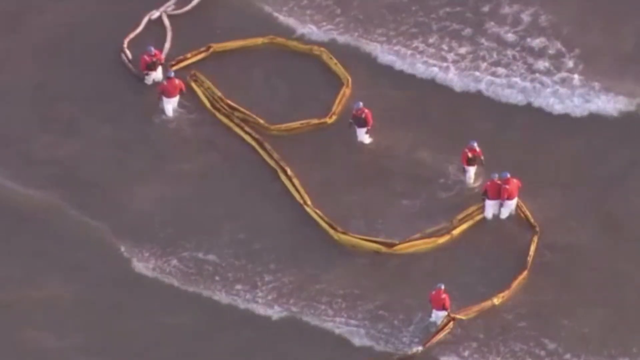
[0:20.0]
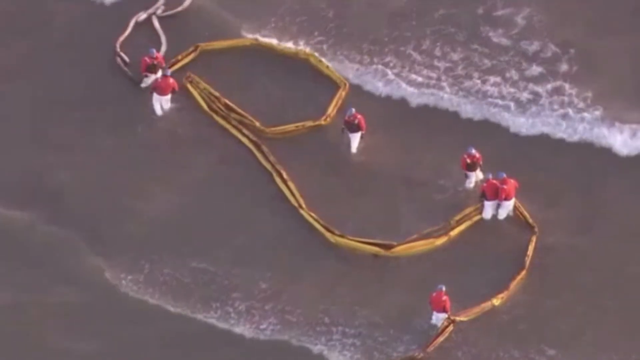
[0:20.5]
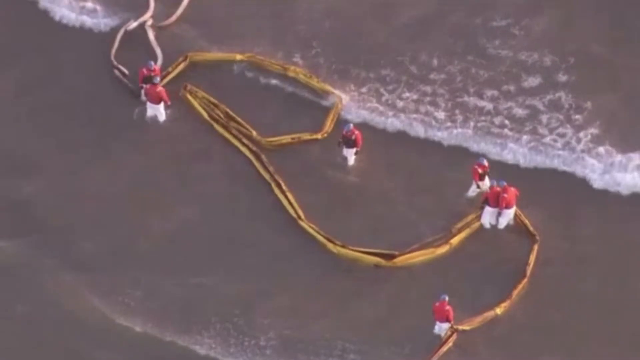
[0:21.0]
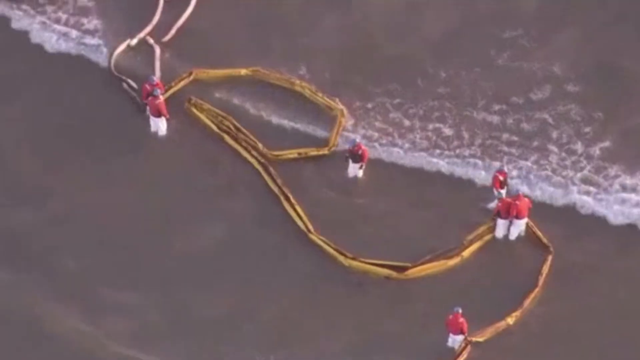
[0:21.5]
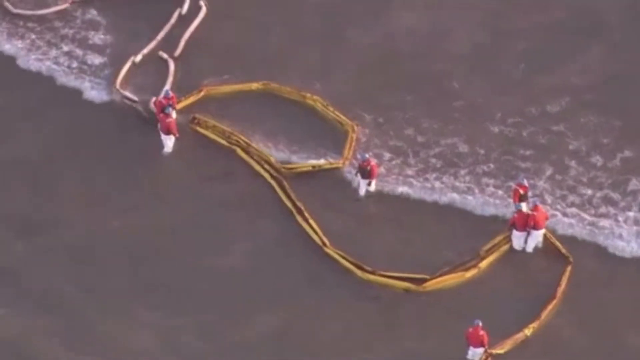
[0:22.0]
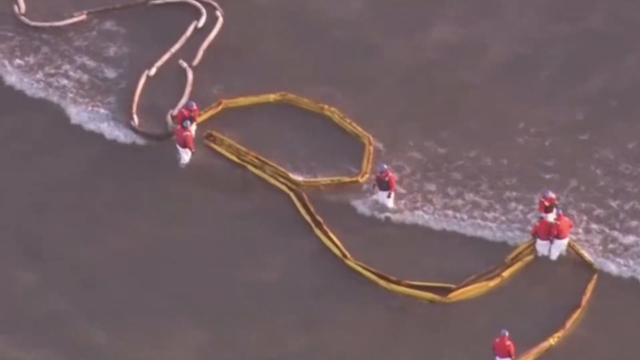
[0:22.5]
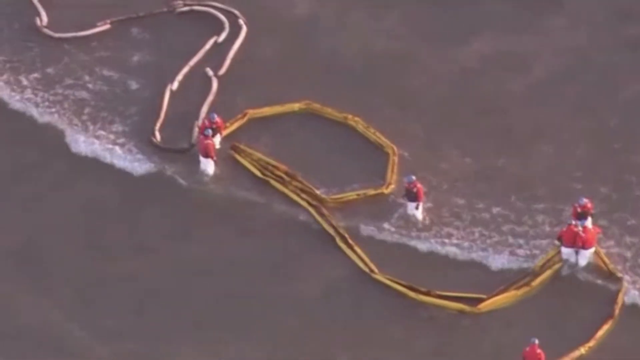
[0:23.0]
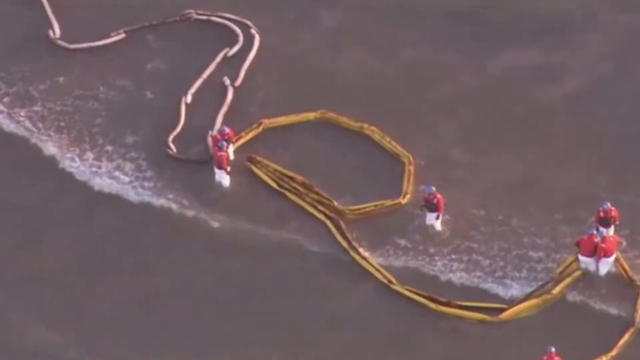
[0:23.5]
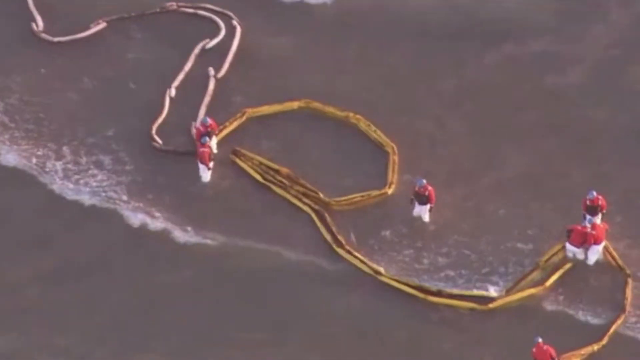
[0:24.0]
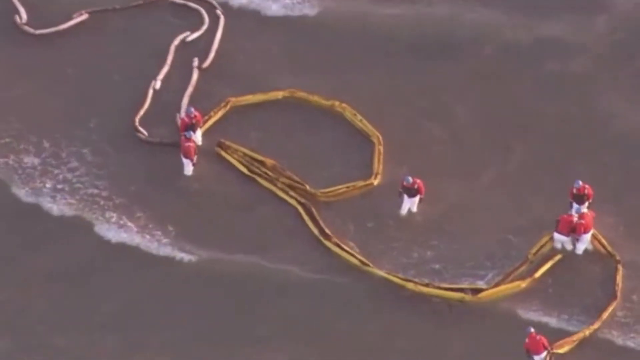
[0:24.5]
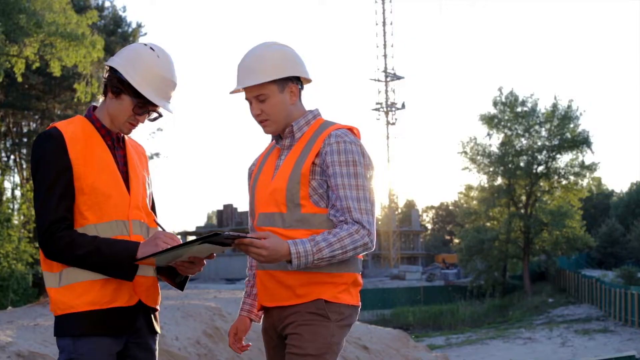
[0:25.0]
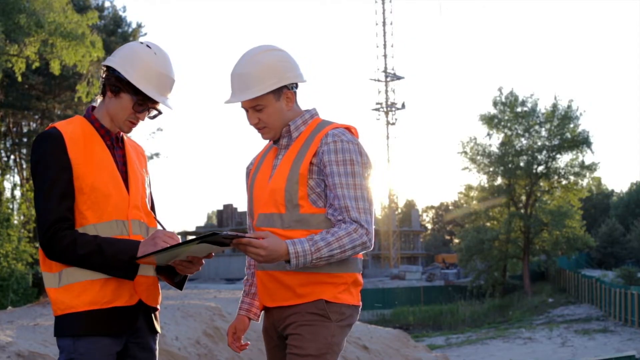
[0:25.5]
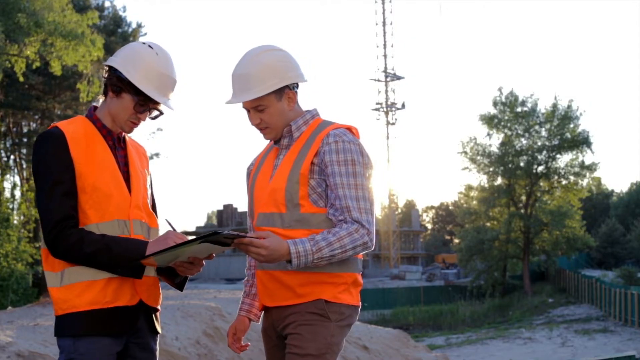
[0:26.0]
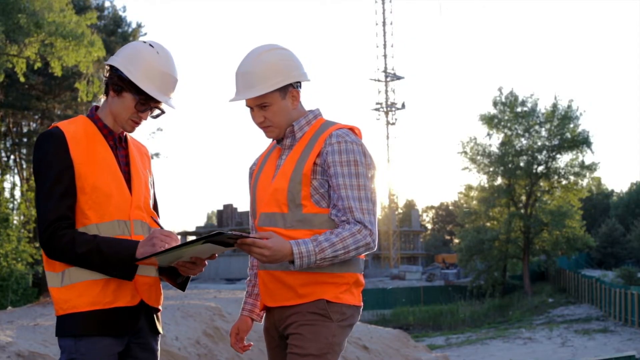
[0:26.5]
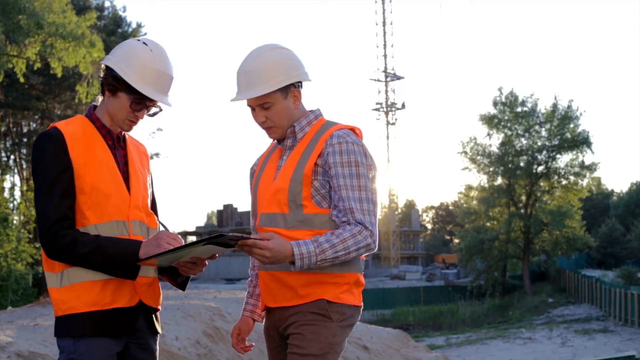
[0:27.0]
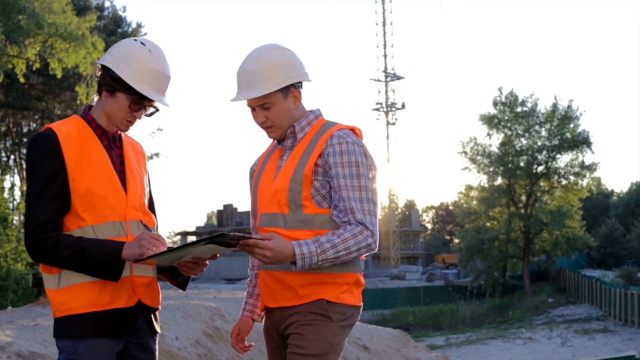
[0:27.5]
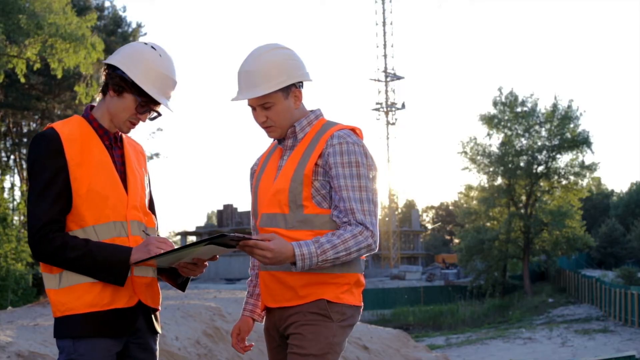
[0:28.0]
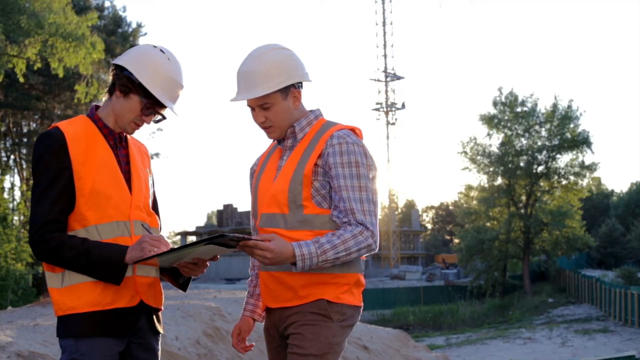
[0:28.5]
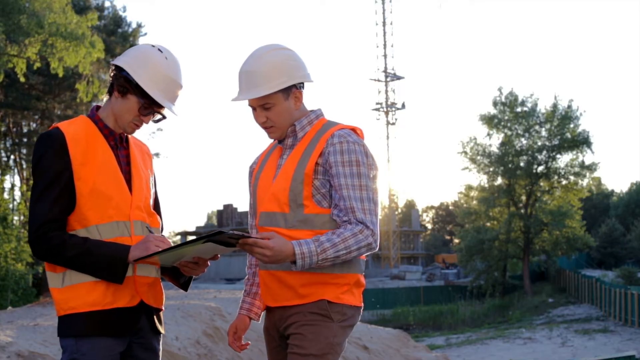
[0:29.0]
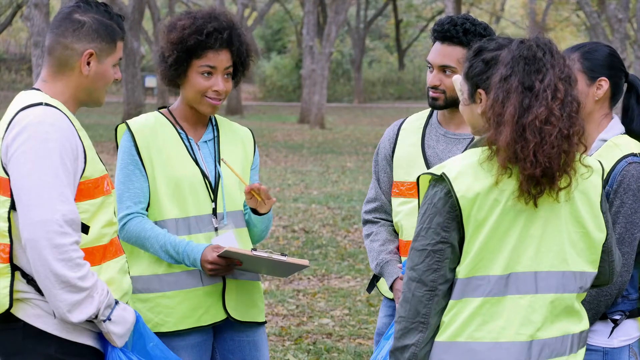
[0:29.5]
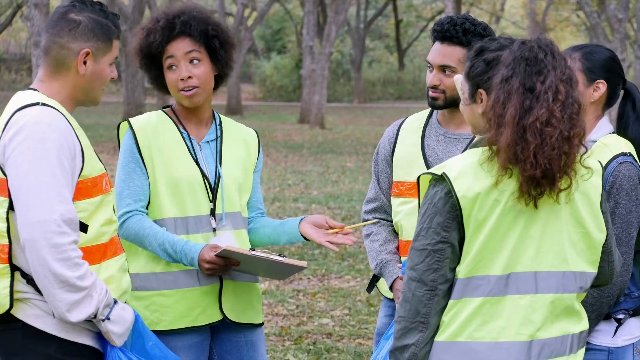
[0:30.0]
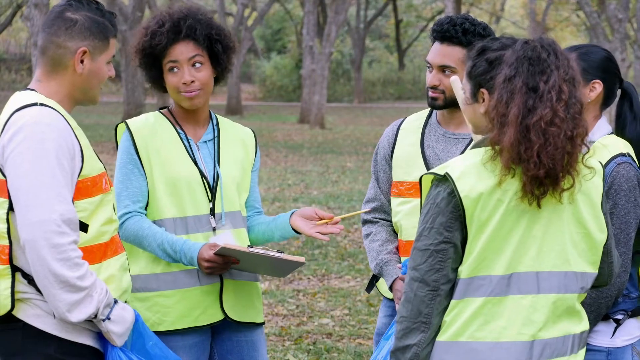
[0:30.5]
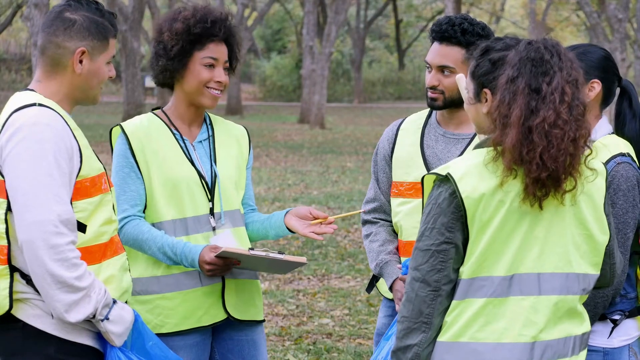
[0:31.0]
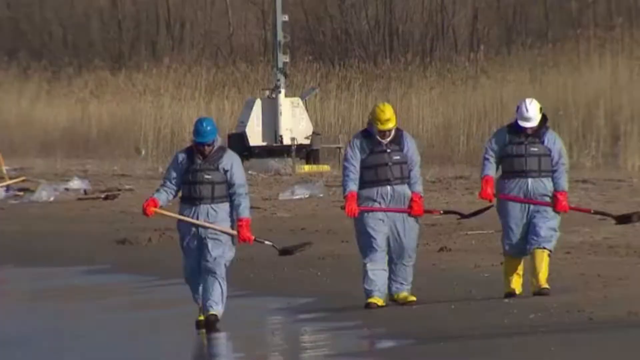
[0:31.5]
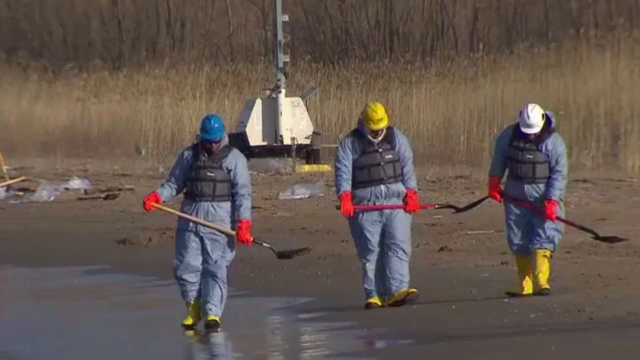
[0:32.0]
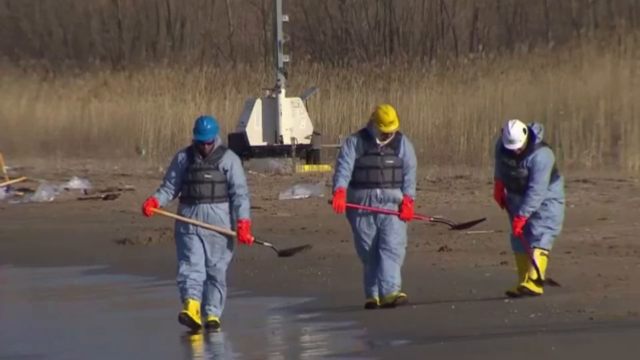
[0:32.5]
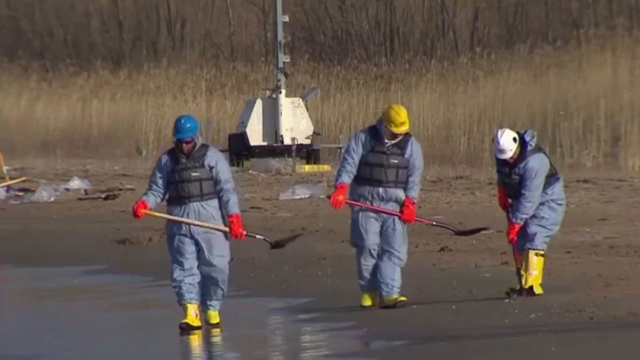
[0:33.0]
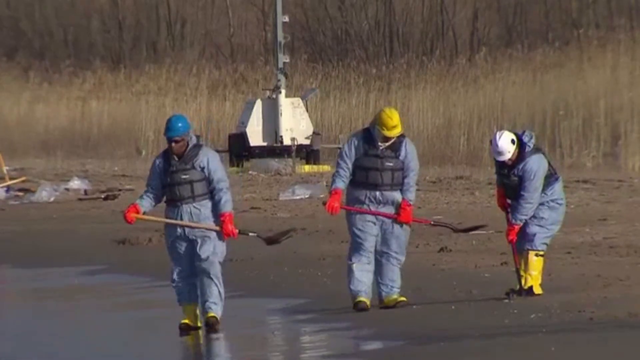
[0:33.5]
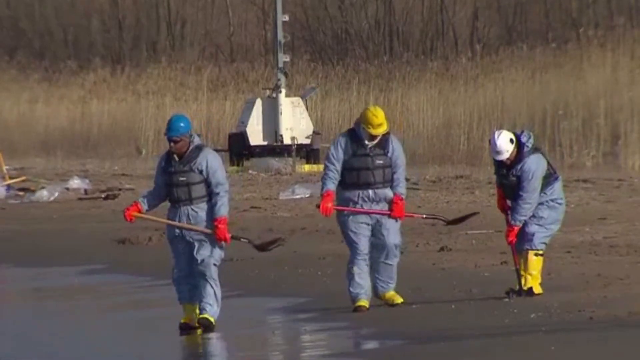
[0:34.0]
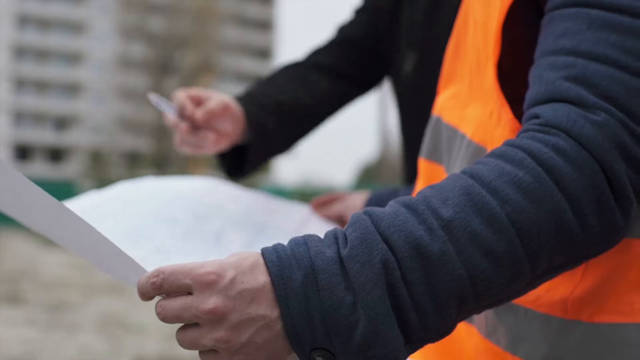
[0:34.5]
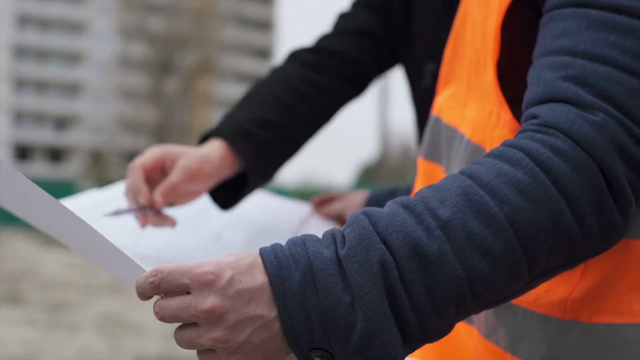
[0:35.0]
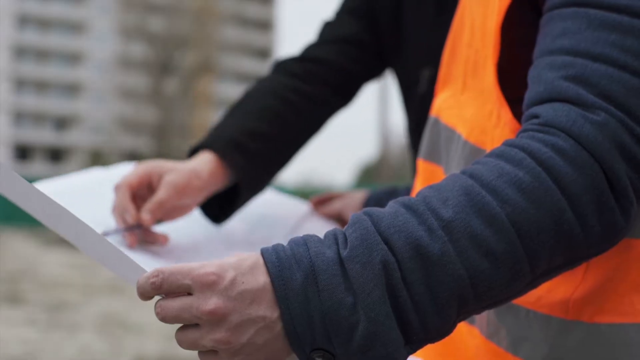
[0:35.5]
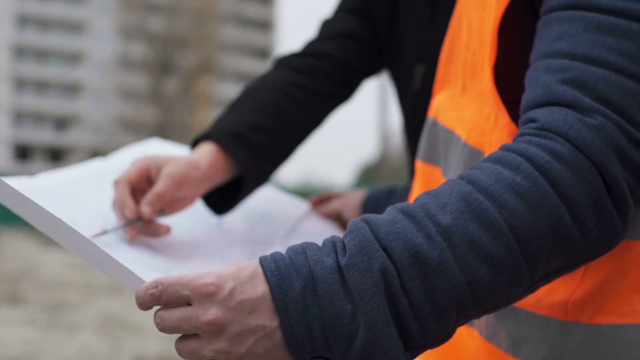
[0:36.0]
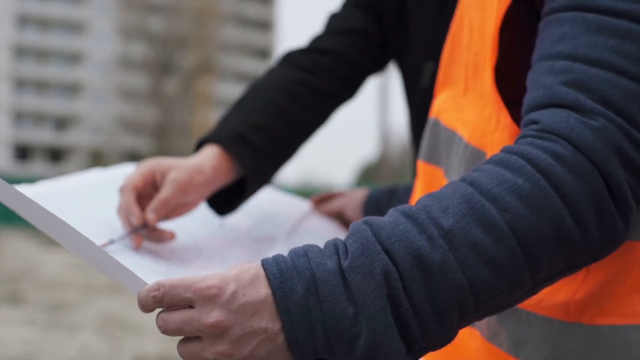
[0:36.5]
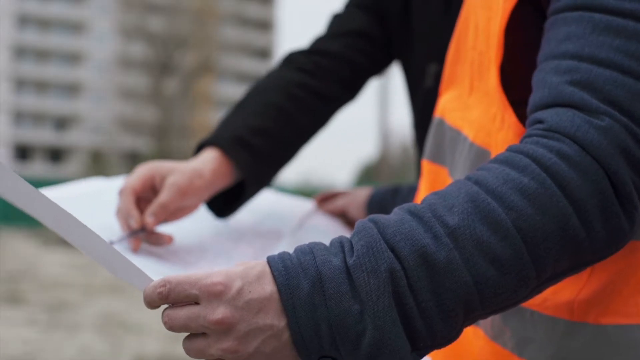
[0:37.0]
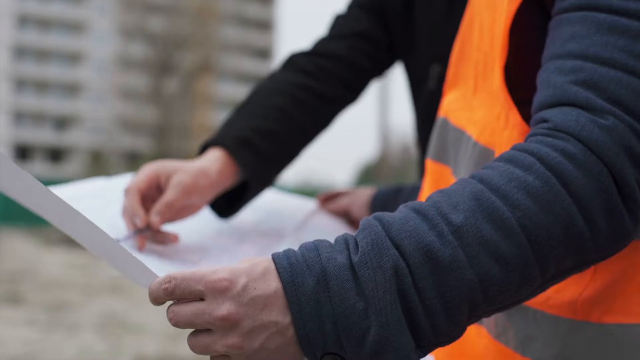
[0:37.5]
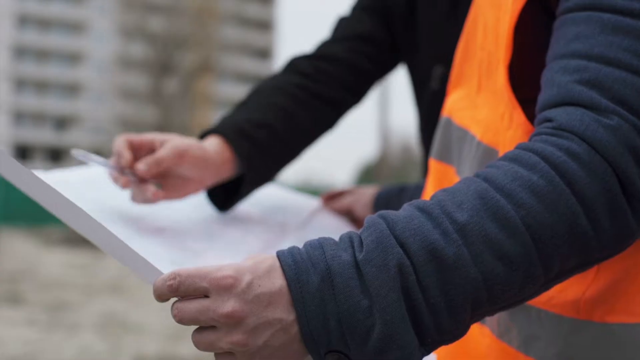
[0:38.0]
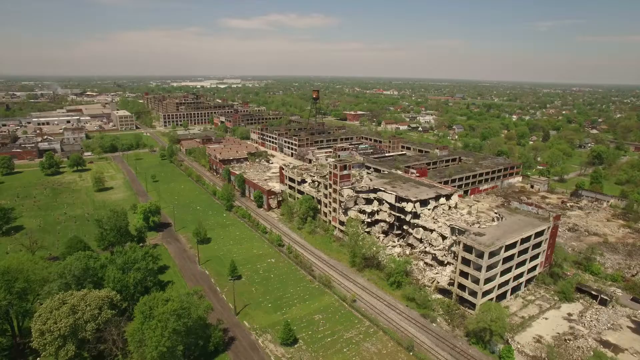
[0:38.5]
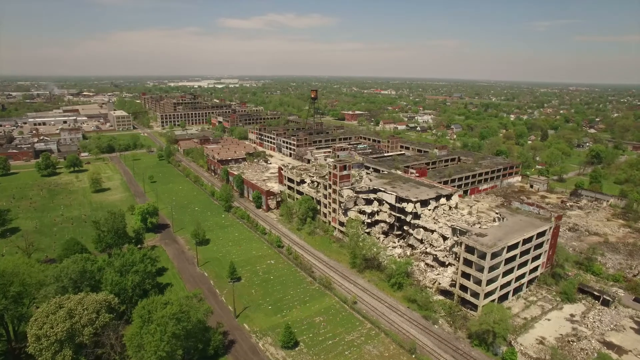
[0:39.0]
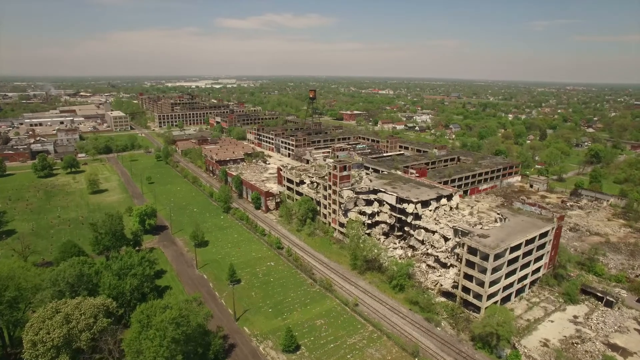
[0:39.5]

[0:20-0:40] About seven workers wearing white pants are about waist deep in the water, with waves coming from the top of the frame toward the bottom, and large yellow tubes are snaked around the center. Next, two workers are near a body of water. They wear orange construction vests with gray stripes and white hard hats; the person on the left has glasses and is writing on a clipboard. Then five people in a park also wear yellow vests, and one of them grips a clipboard. After that, three workers are on a shoreline, with the water visible at the bottom left. They hold shovels and wear red gloves, hard hats and yellow rain boots. The sequence ends with stock footage of what looks like buildings that have collapsed.